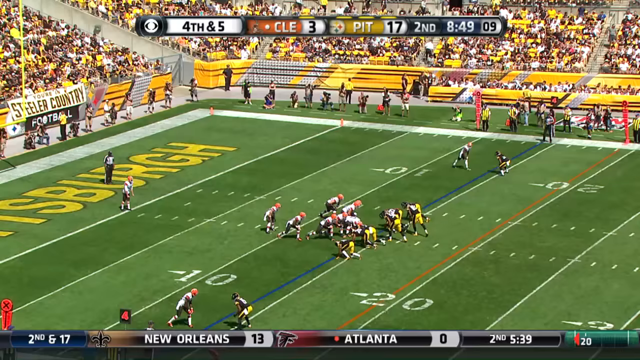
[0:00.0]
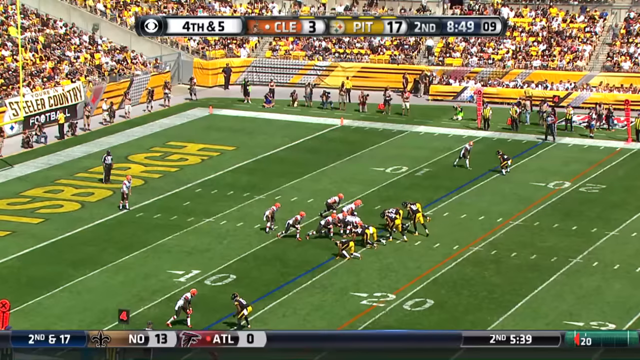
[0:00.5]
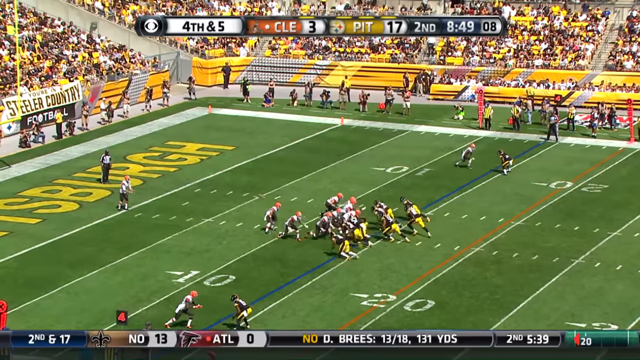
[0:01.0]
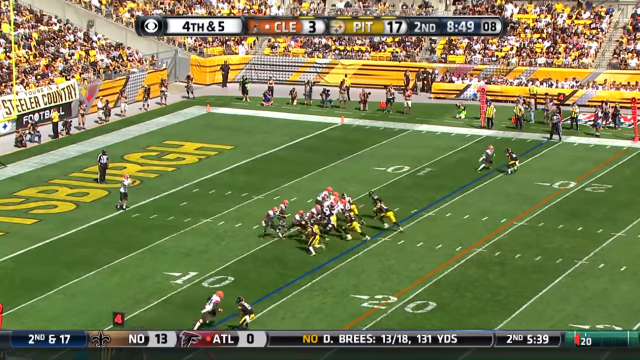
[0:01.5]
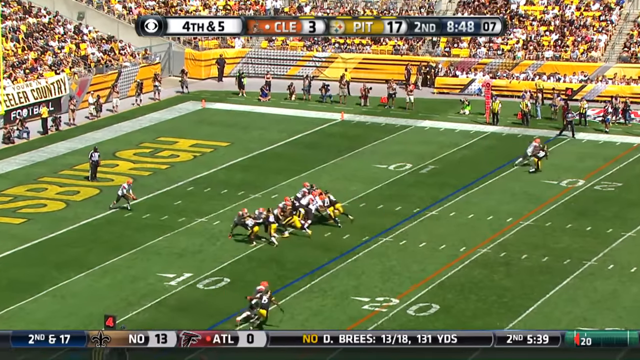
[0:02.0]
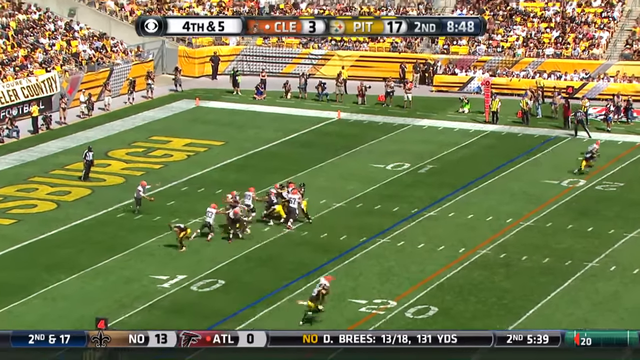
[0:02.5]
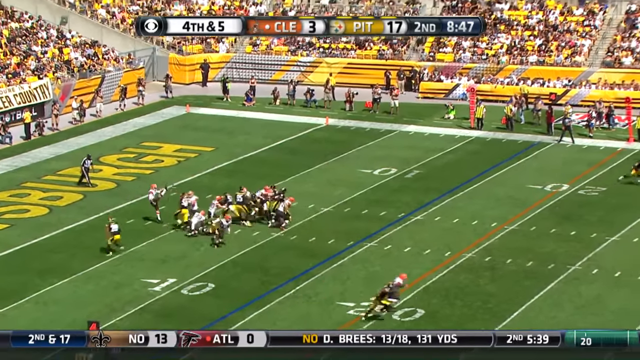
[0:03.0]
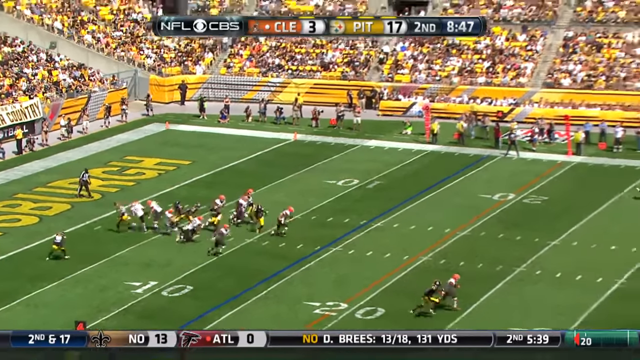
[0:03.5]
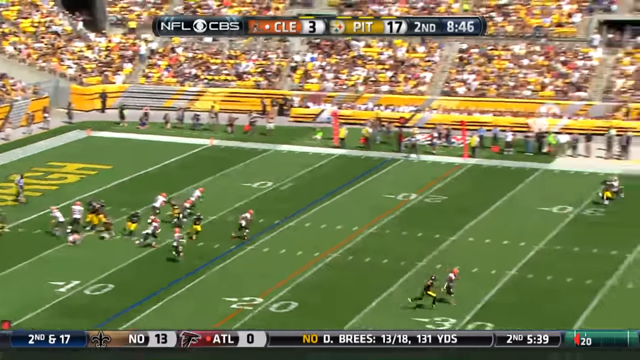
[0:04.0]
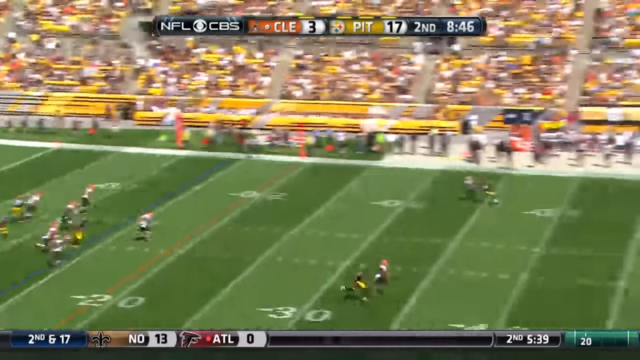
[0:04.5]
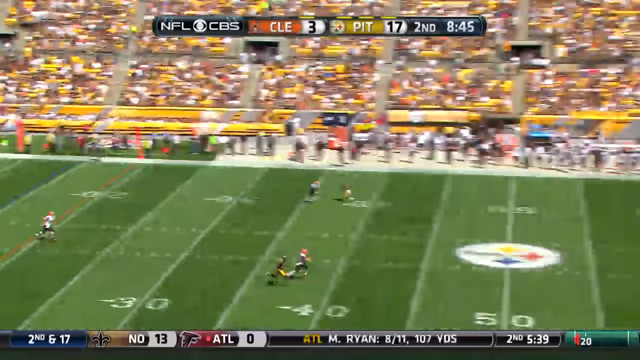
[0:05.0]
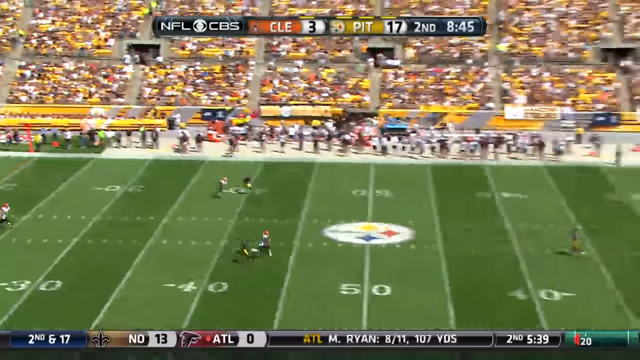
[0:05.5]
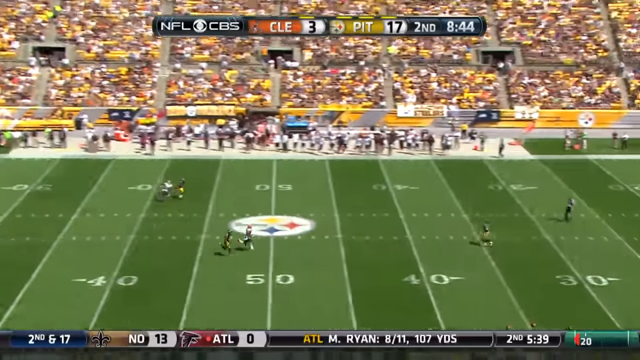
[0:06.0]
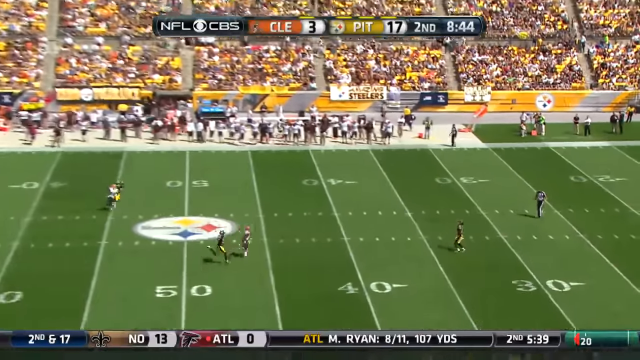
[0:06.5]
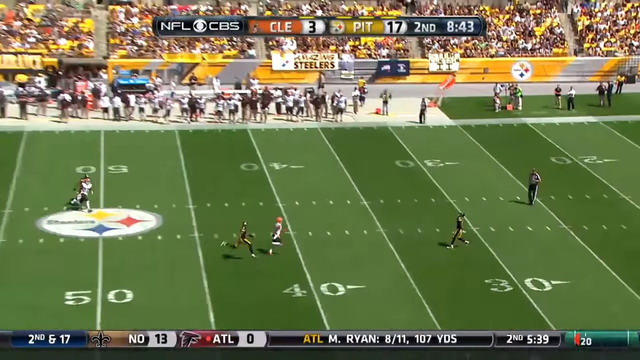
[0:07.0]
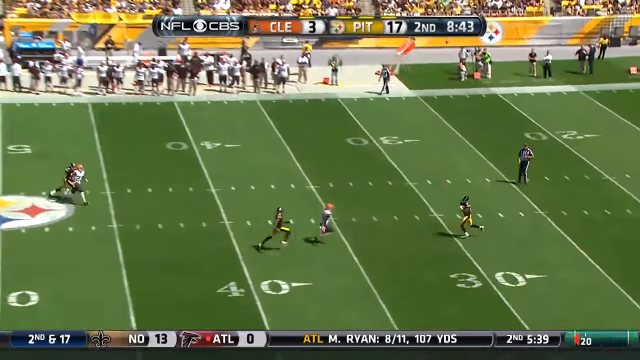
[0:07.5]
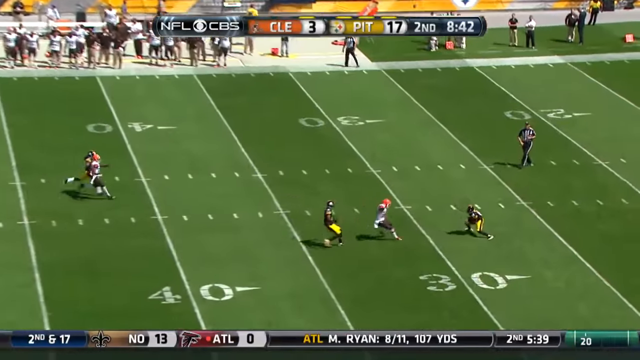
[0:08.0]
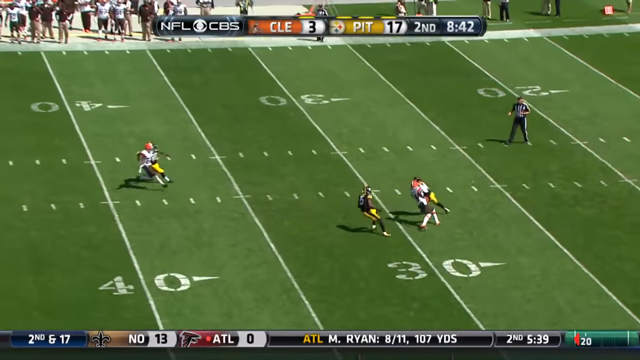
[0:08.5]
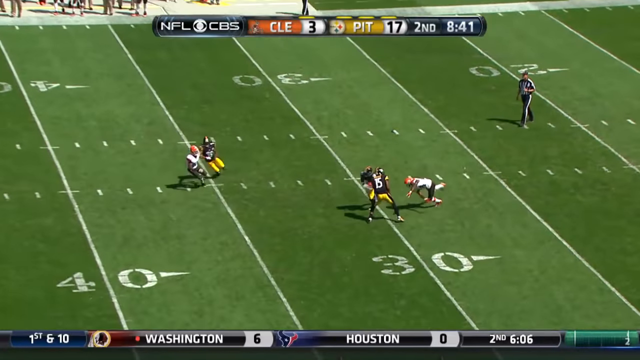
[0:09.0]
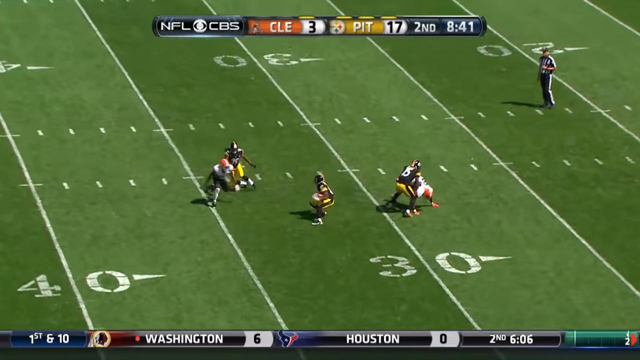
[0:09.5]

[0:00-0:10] Two professional football teams play in what is sort of a large stadium, with a CBS TV logo on top. Based on the team initials, the teams are Cleveland and Pittsburgh. Cleveland has 3 points and Pittsburgh has 17; it is fourth and five in the second quarter, with 8 minutes and 48 seconds left. Cleveland, in orange helmets, is near the end of the line, near the touchdown zone, and seems to be making a play to kick the ball away, while Pittsburgh is sort of trying to get to the ball before they can kick it. At the bottom of the screen is another scoreboard for a different game, between New Orleans and Atlanta: the second, with 6 minutes and 17 seconds left, New Orleans 13, Atlanta 0. Other statistics for that game also appear at the bottom, including 131 yards and second quarter, 5 minutes and 39 seconds. Cleveland manages to kick the ball to about the 30 line on the other end of the field. A Pittsburgh player catches it and starts running toward the Cleveland side, dodging two players.